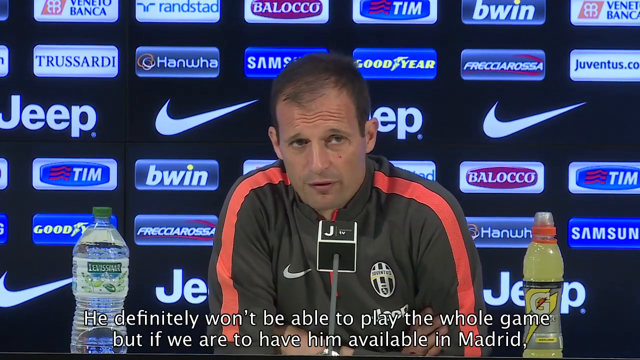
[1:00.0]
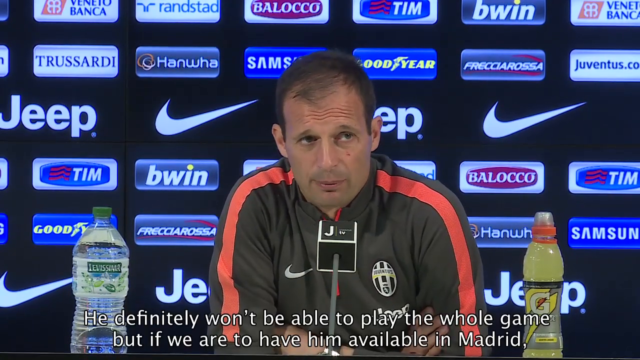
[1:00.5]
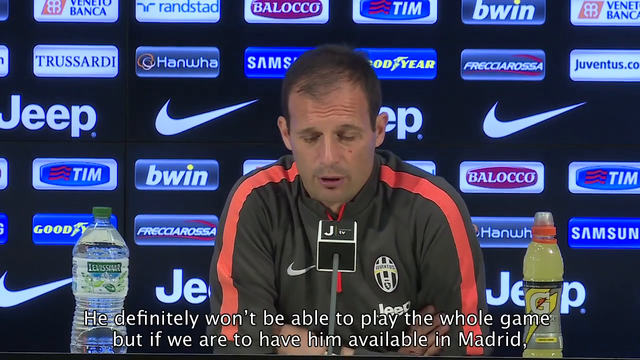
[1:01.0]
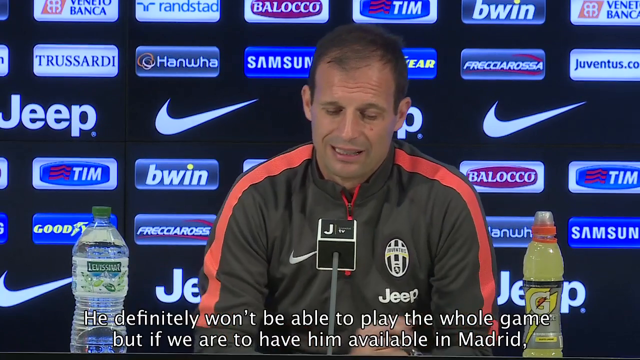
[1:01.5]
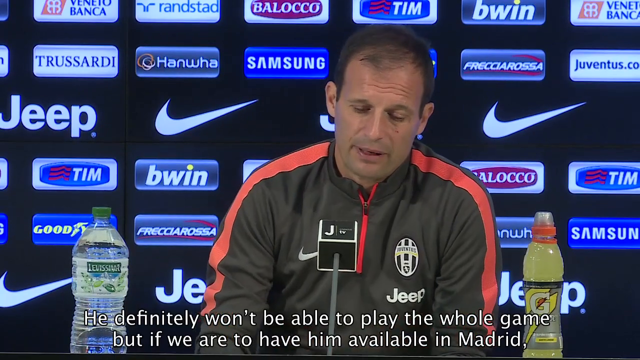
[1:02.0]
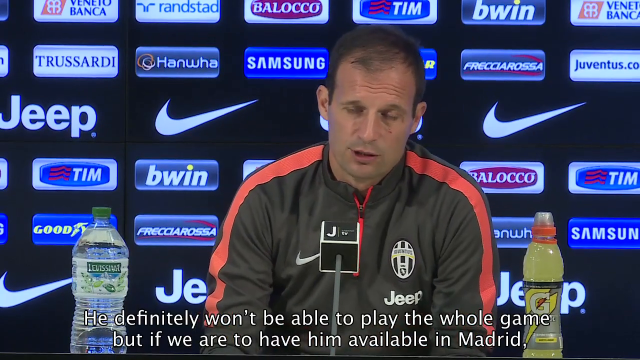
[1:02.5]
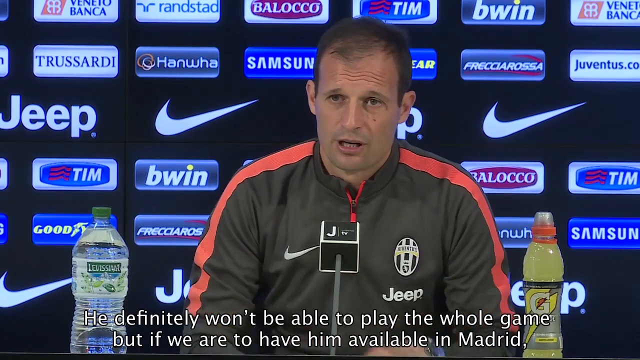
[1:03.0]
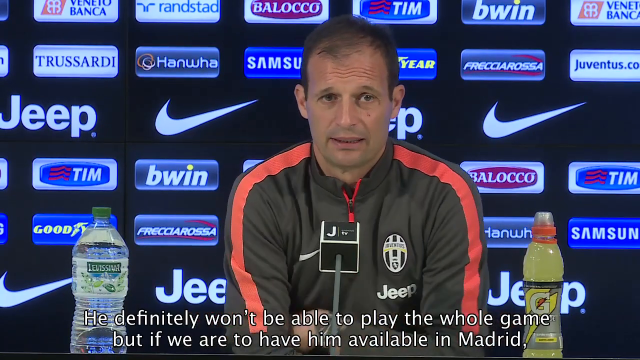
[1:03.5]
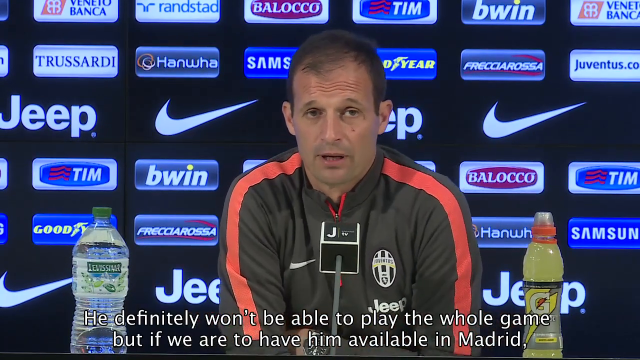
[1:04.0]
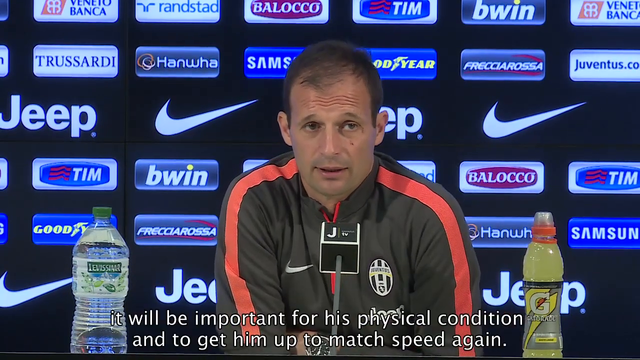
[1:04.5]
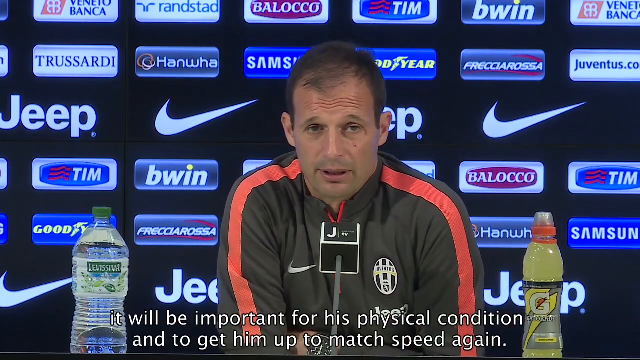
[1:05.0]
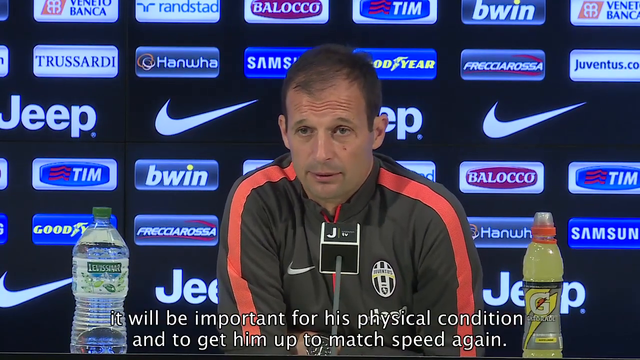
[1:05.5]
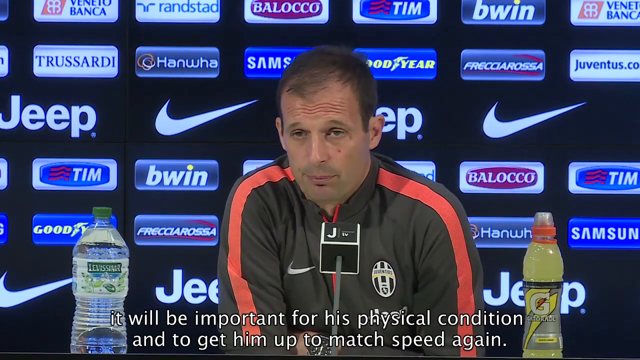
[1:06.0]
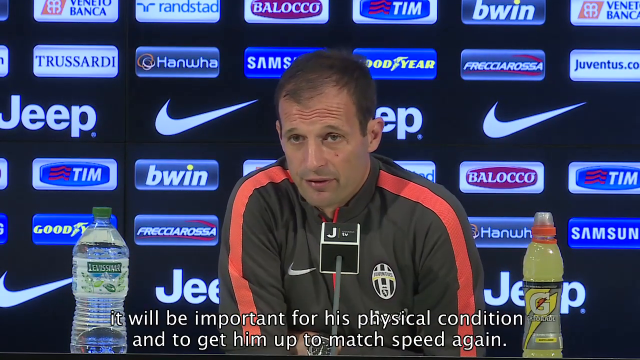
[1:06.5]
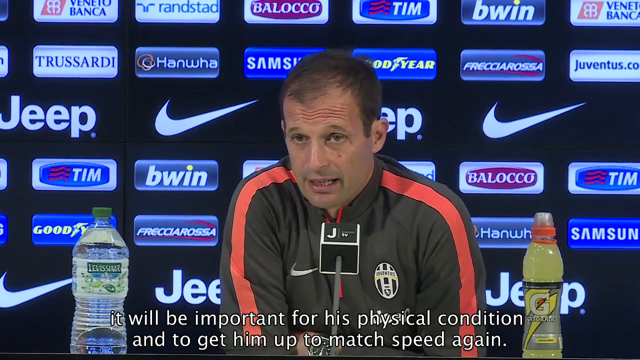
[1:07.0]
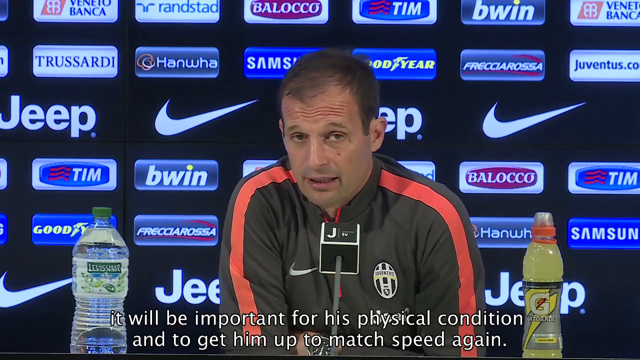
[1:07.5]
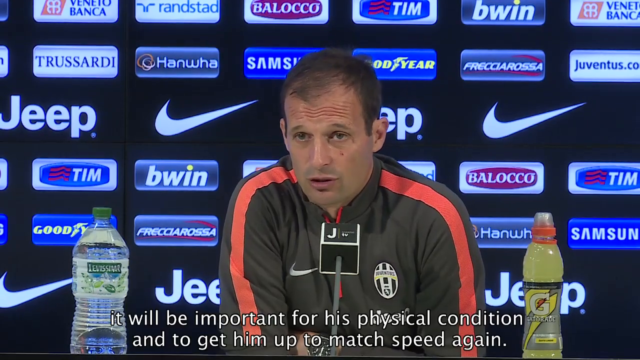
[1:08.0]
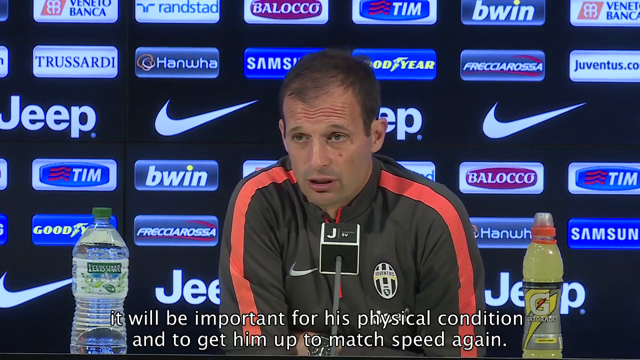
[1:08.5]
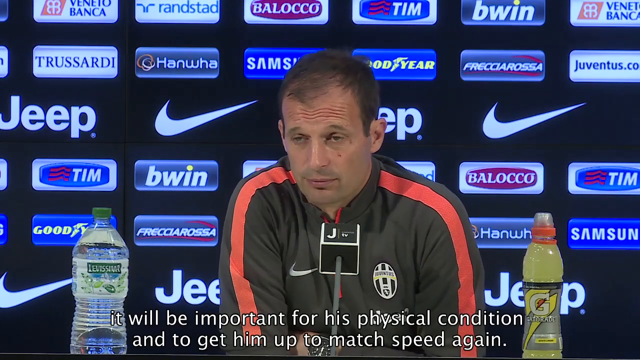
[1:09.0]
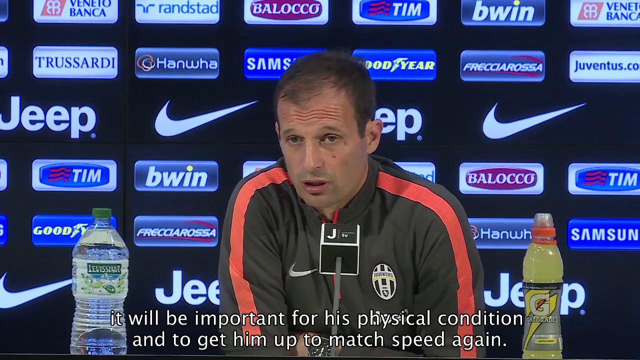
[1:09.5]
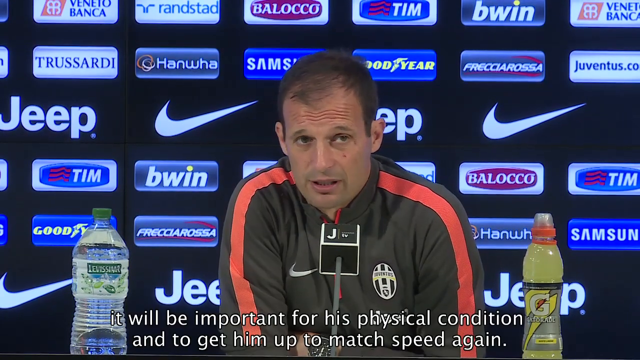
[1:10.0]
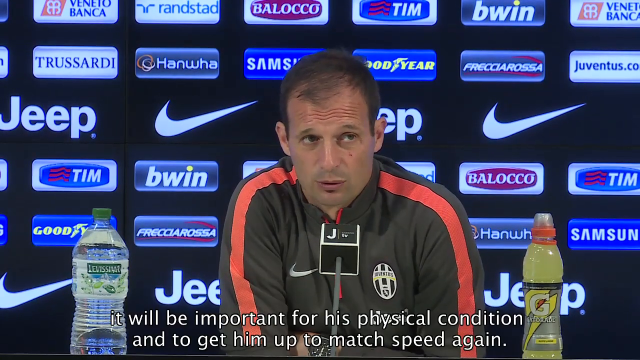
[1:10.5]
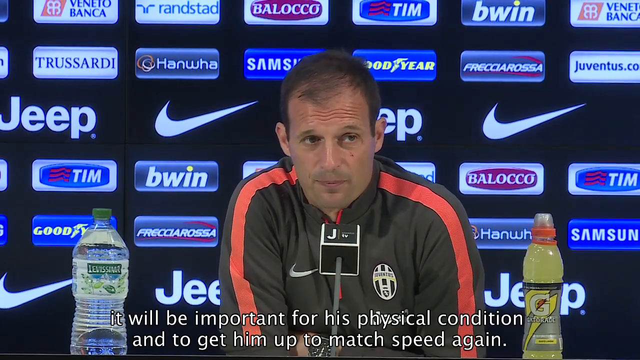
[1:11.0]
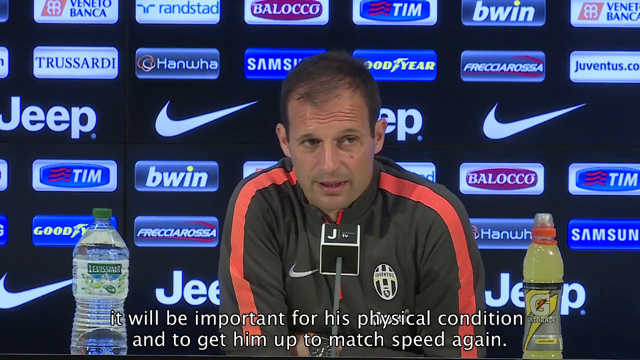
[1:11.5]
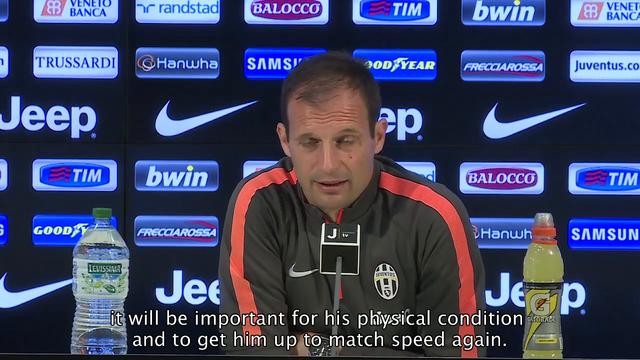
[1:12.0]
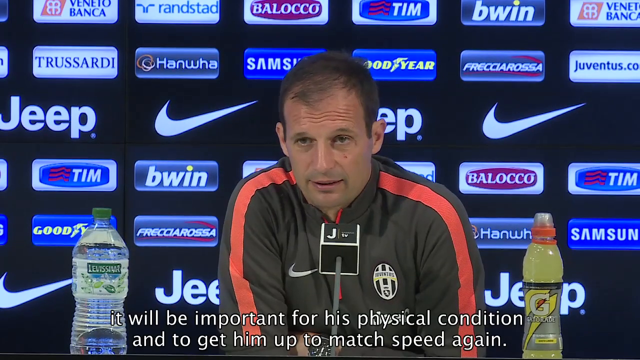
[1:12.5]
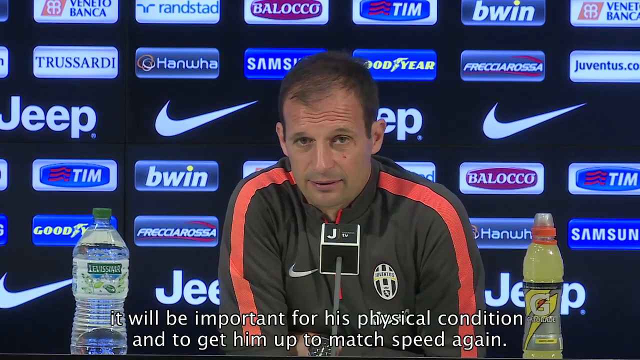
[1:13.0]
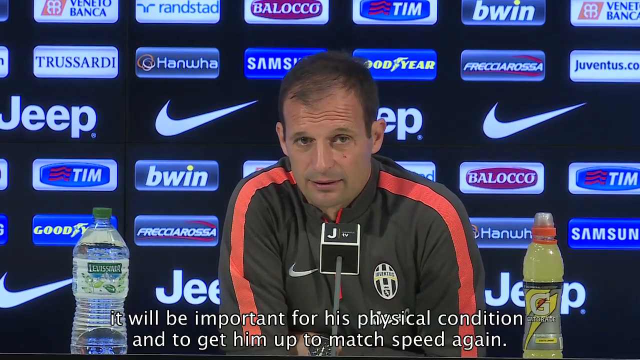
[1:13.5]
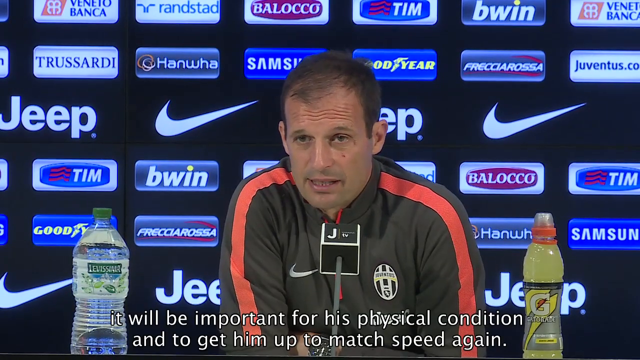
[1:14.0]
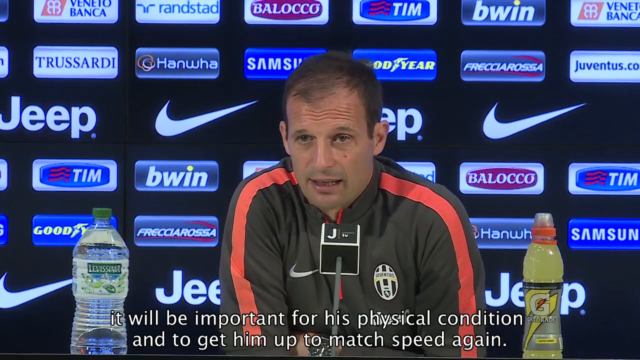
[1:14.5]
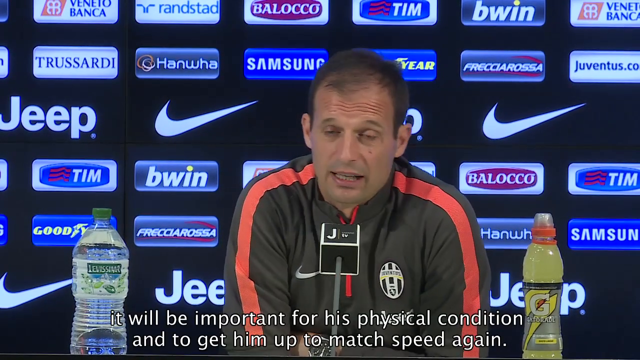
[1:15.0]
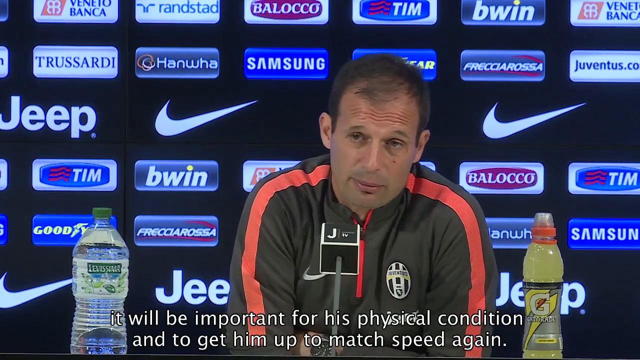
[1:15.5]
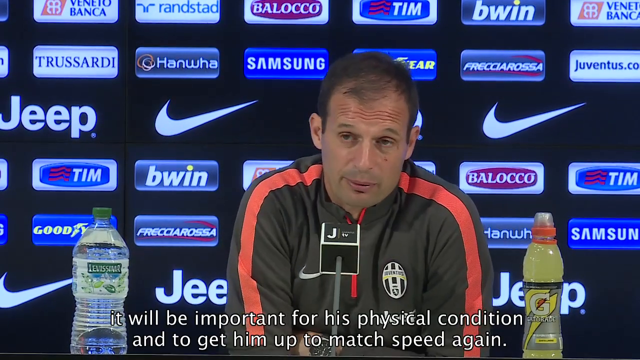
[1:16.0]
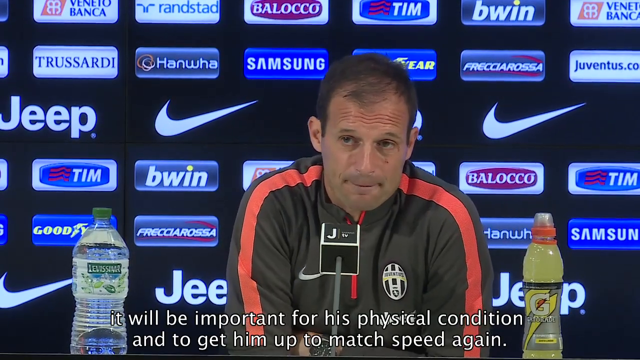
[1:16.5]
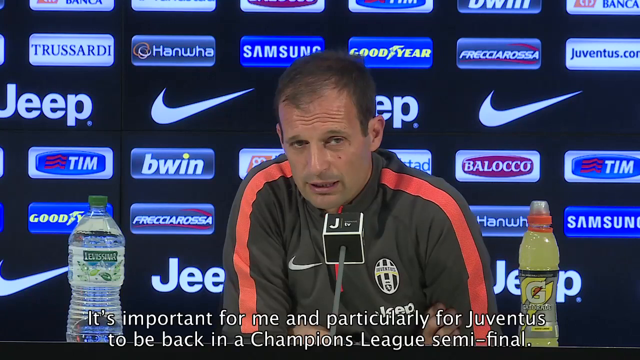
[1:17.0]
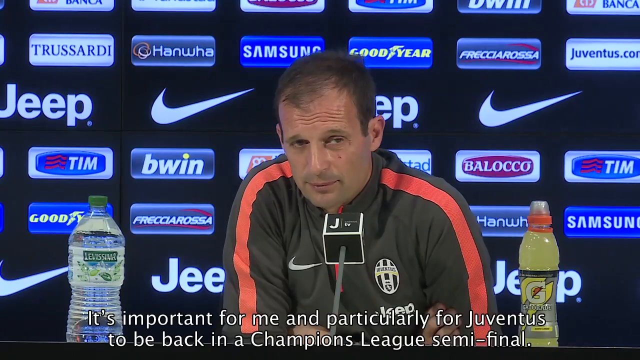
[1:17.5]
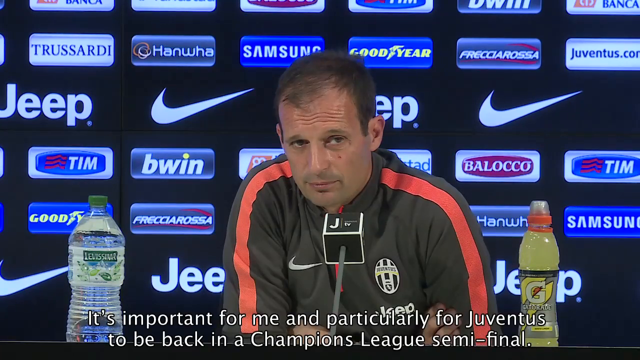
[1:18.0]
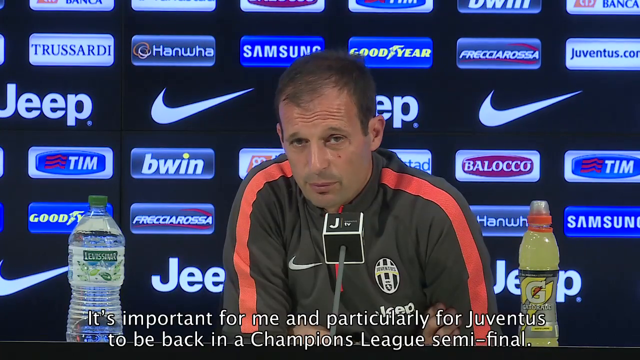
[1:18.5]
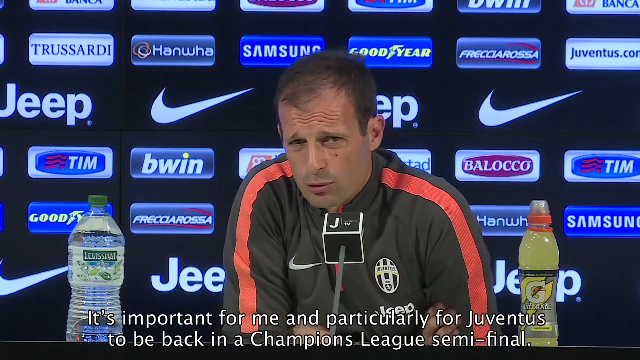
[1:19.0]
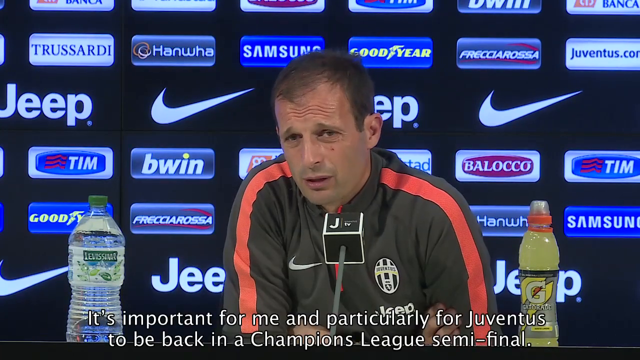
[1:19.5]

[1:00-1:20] The man continues to talk, saying, "it will be important for his physical condition and to get him up to match speed again," and then, "it's important for me and particularly for Juventus to be back in the Champions League semi-final." Among the sponsors behind him, in the top left, is a small red parallelogram block with what looks almost like the outline of a clover leaf in white, and to its right capital letters that appear to read "Veneto Banca." To the right of that is a sponsor called Randstad, then a white tab with a maroon oval containing white capital lettering that reads "Balocco," and to the right of that one that reads "Tim."